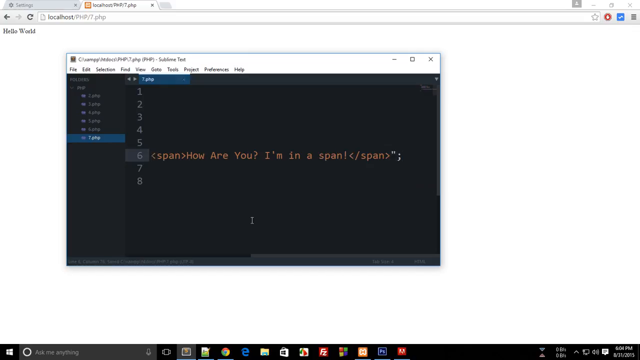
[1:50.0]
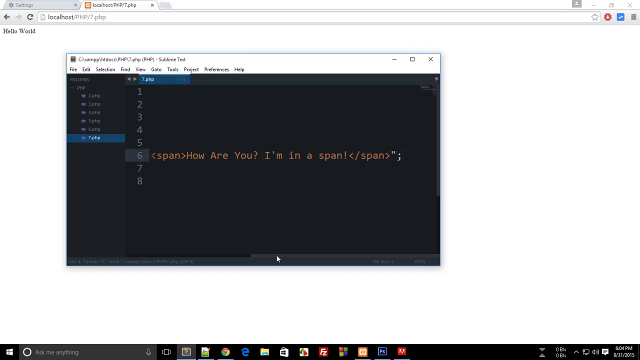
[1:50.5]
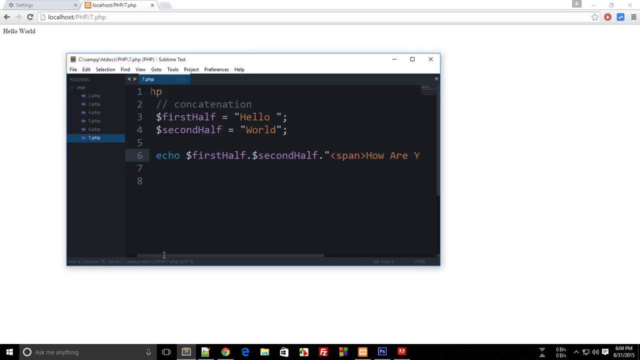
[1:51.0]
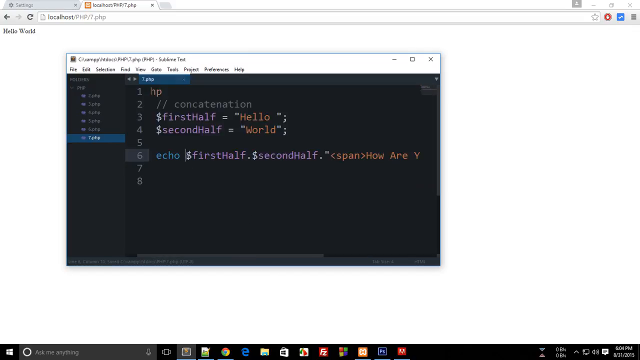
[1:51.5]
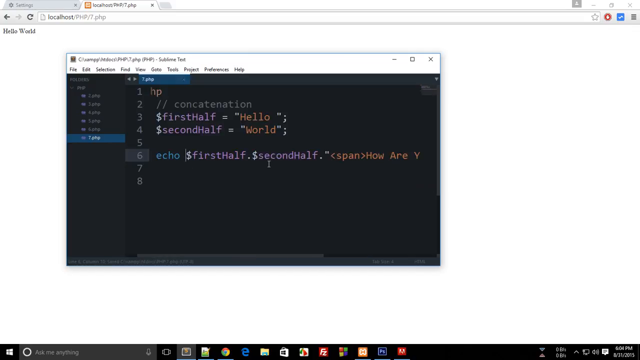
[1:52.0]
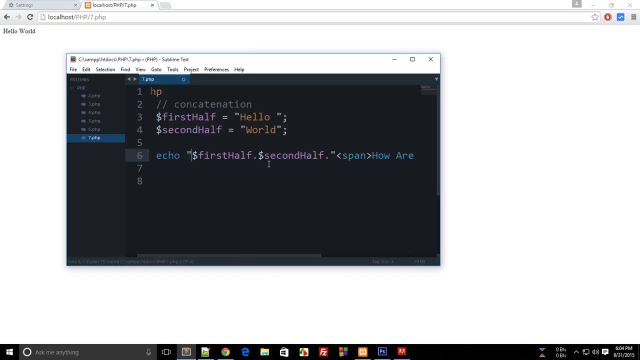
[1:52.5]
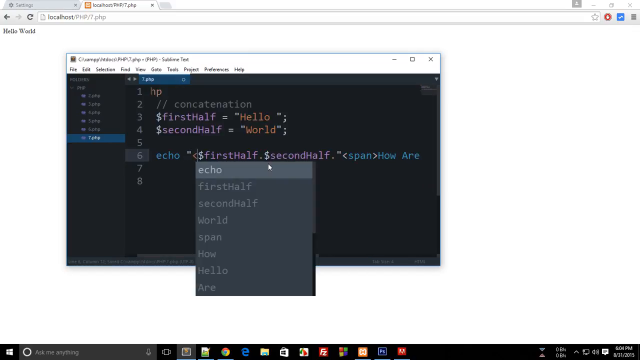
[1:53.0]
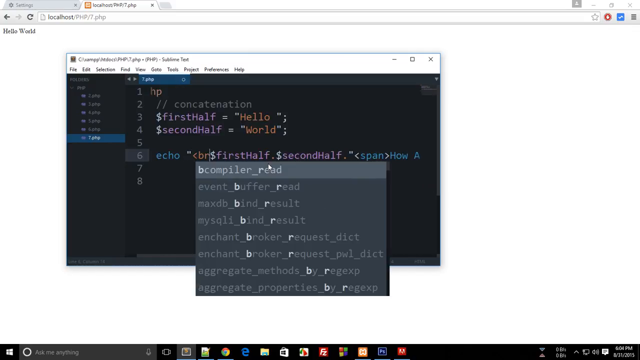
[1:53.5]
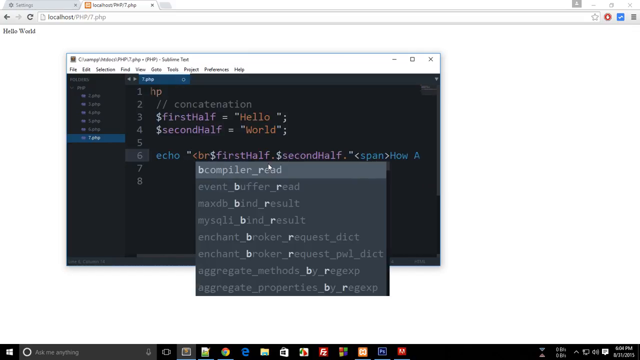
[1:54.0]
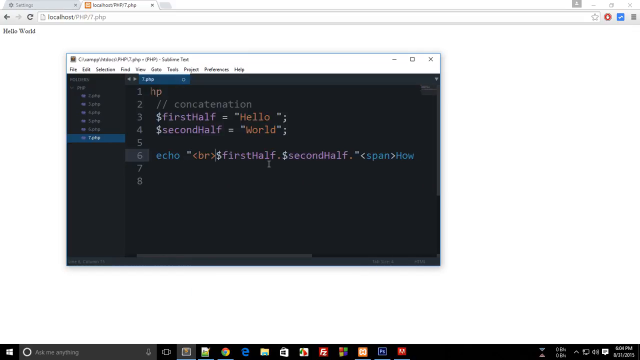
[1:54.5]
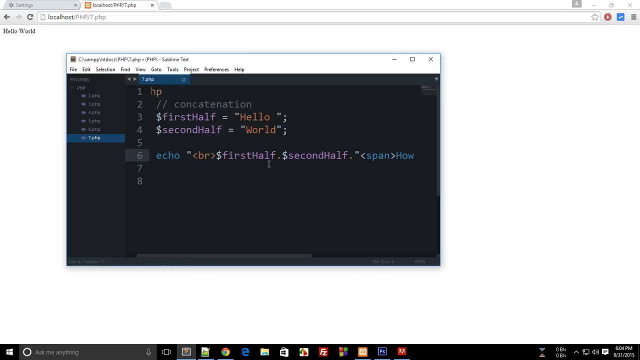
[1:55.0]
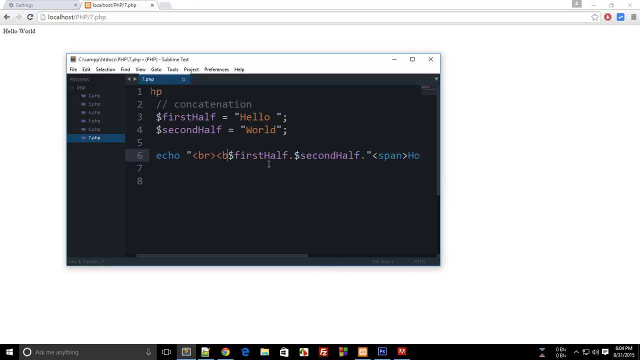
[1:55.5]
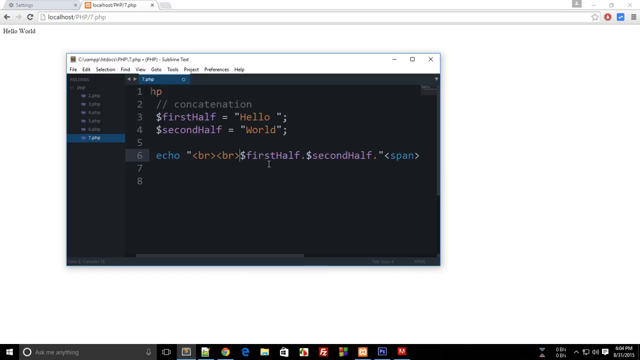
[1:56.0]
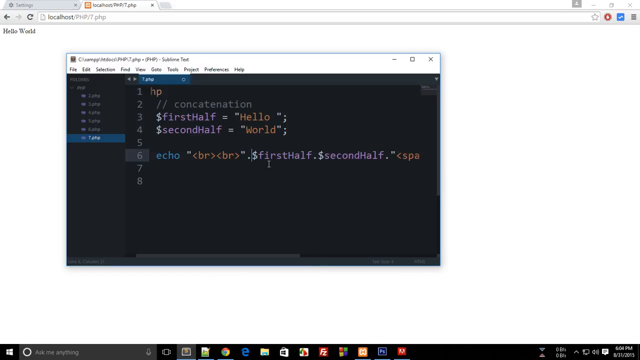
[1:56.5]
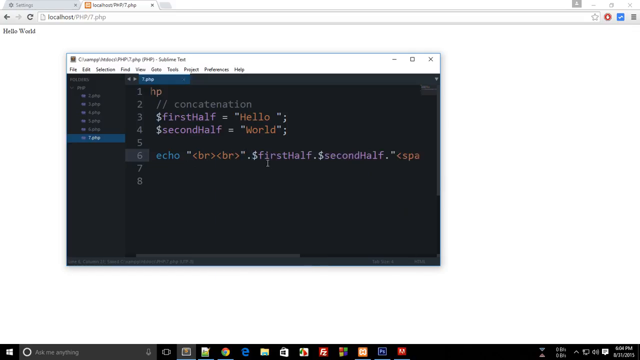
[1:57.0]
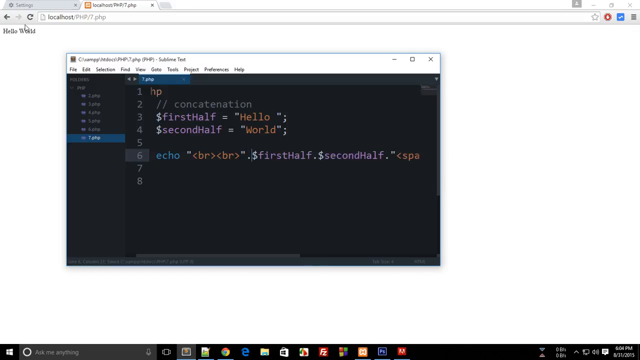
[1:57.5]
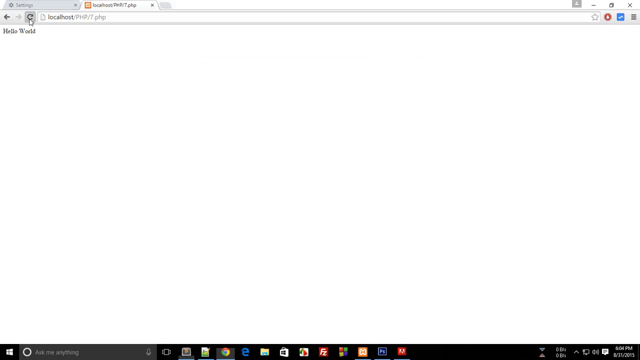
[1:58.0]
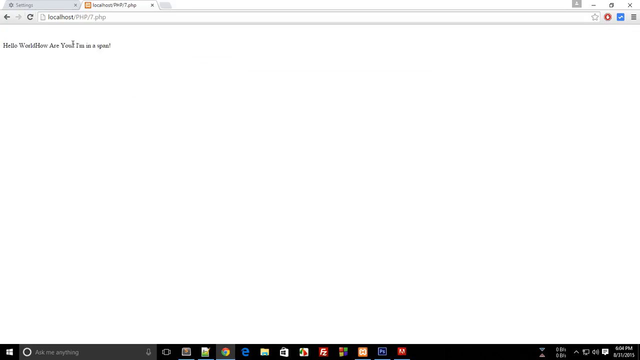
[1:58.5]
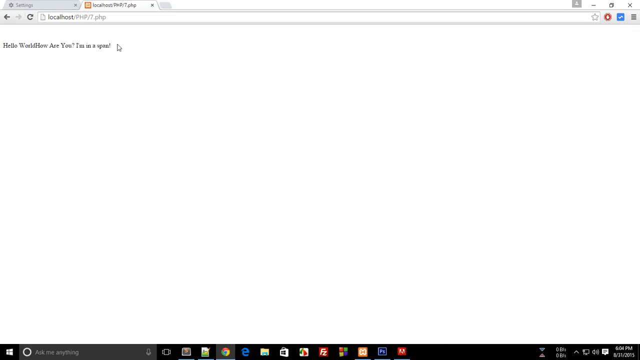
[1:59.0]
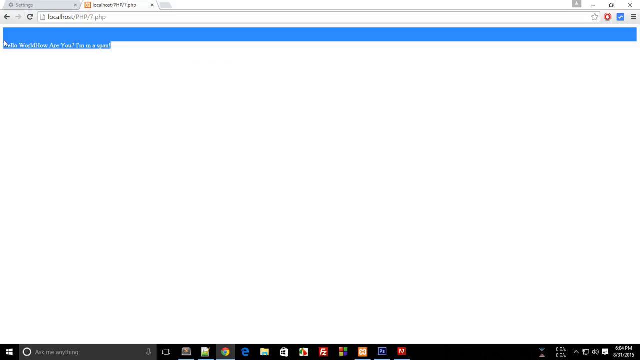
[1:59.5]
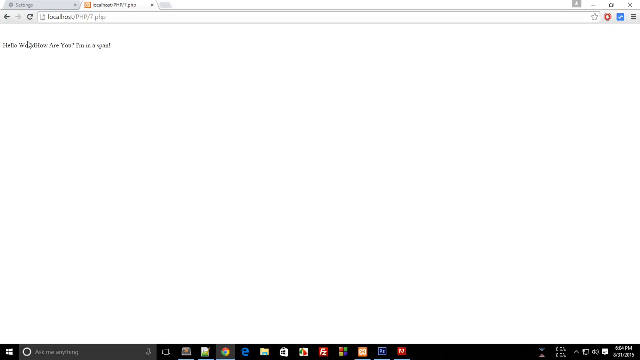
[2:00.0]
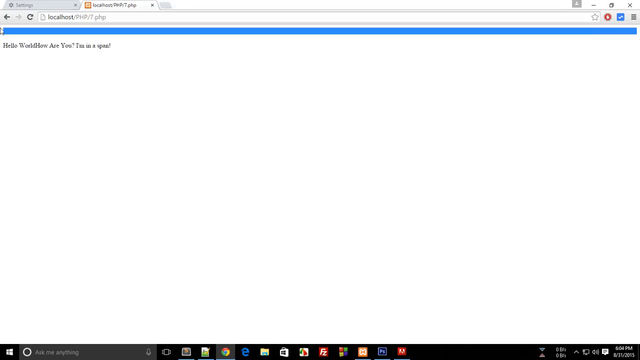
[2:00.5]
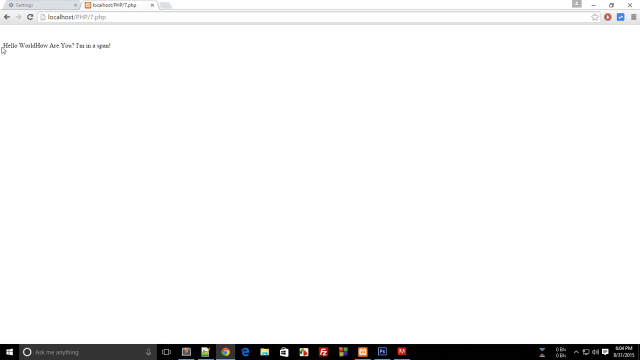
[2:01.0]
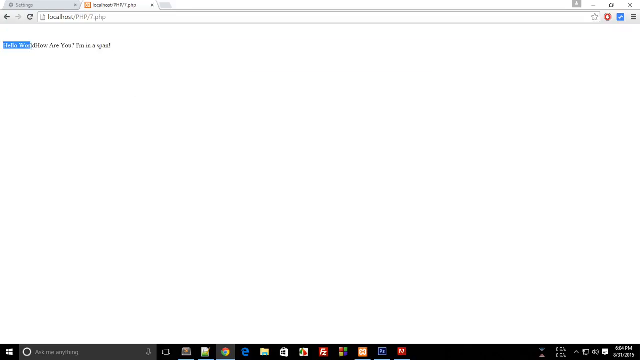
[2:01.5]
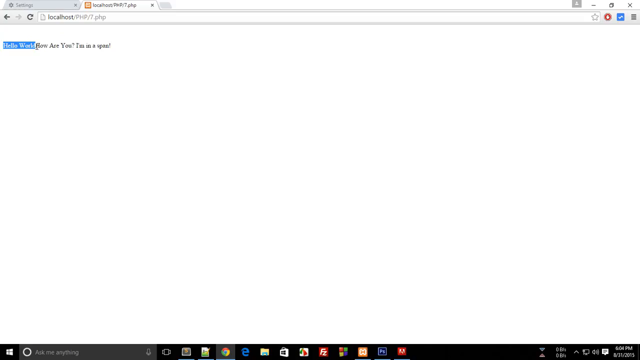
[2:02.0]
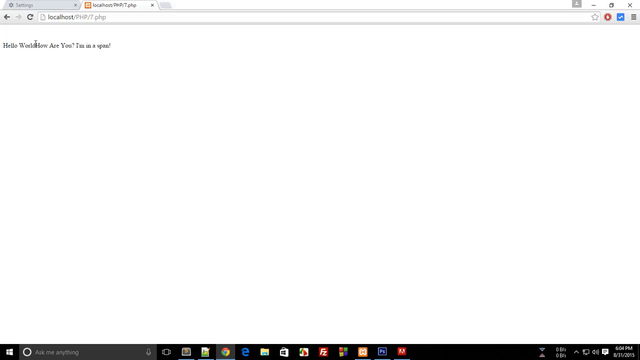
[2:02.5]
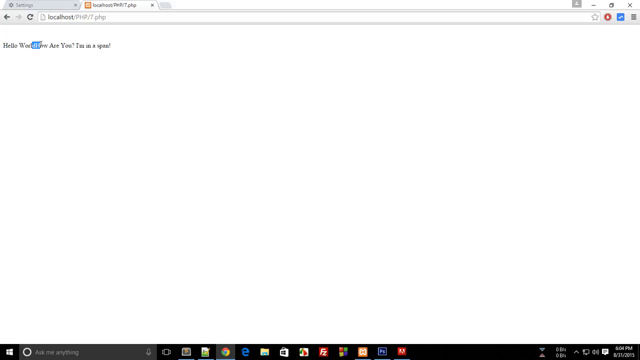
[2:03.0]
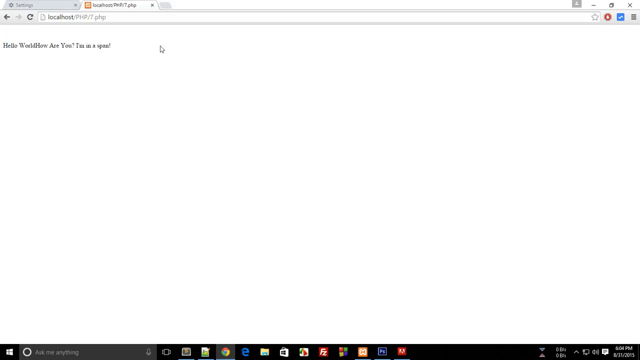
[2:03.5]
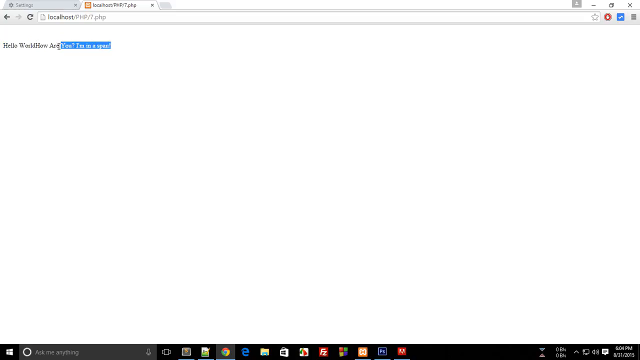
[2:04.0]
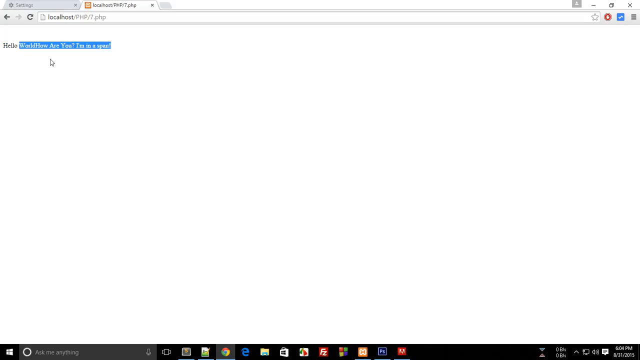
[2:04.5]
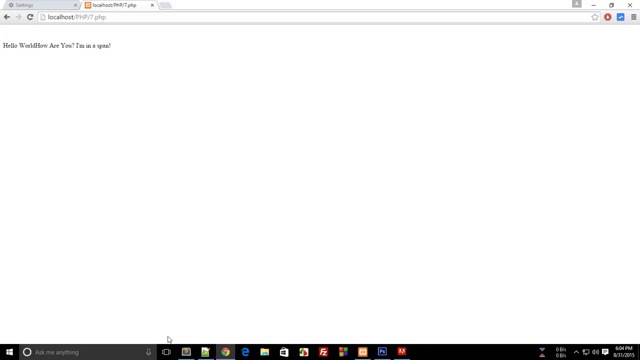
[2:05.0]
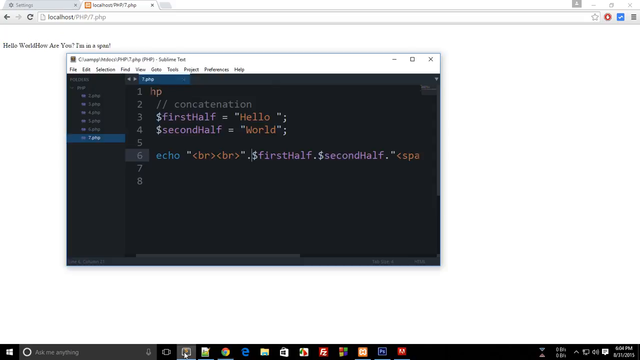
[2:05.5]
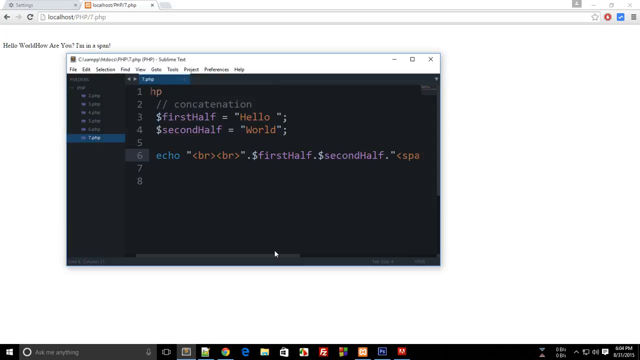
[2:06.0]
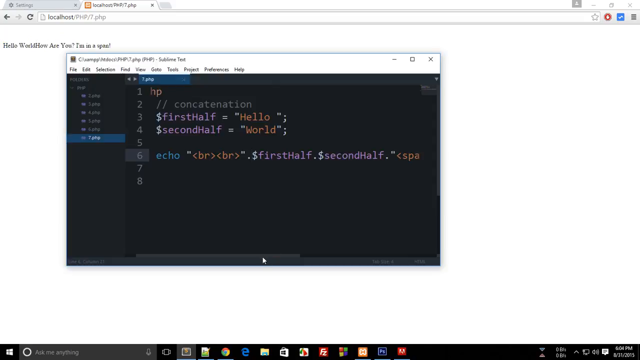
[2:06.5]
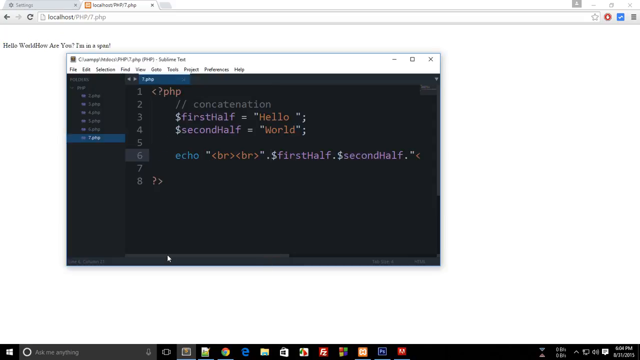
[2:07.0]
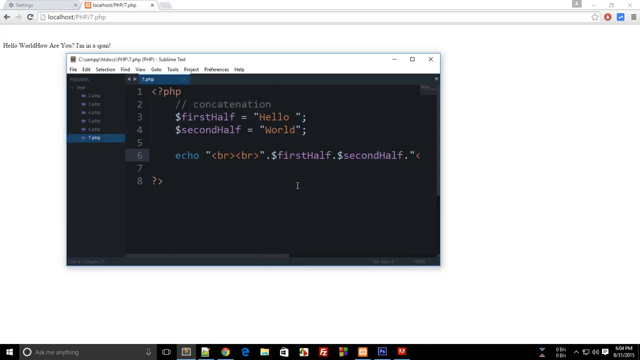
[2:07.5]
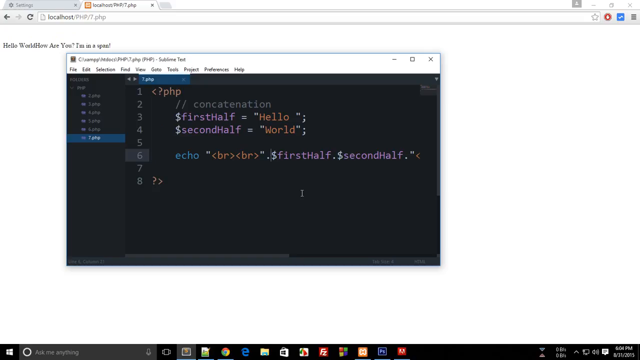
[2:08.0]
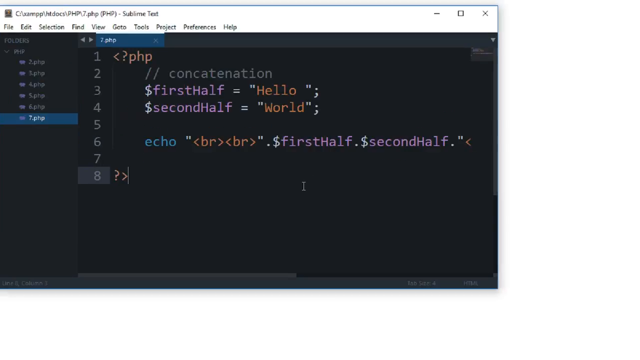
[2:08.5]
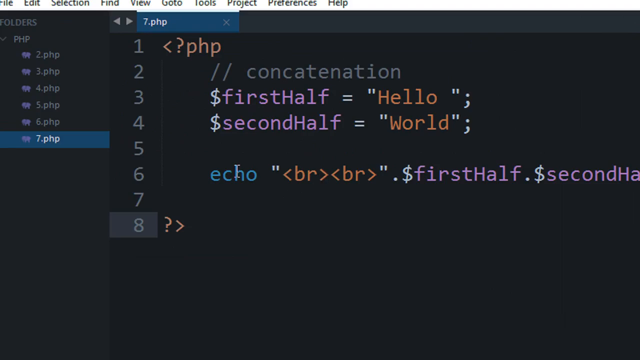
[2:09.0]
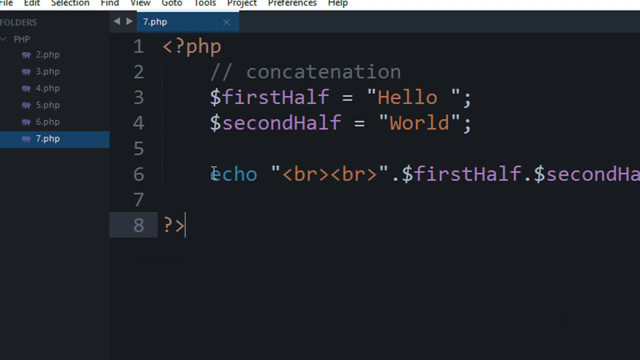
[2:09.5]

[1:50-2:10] Instead of appending another variable to the echo statement, which already has the first half, second half and the span, the individual has deleted the variable they were writing at the end. They add a BR at the front, which looks to be HTML, potentially a break to push the text further down. After saving and refreshing, the browser on localhost shows "hello world, how are you, I'm a span".